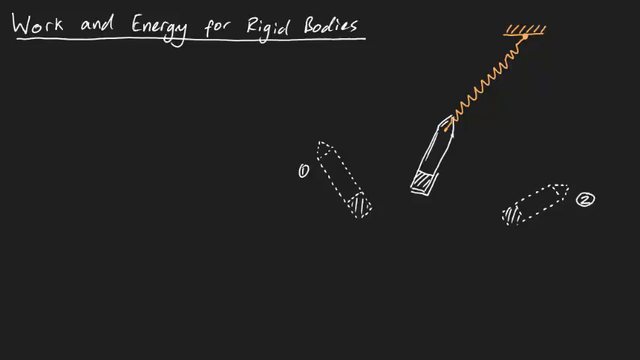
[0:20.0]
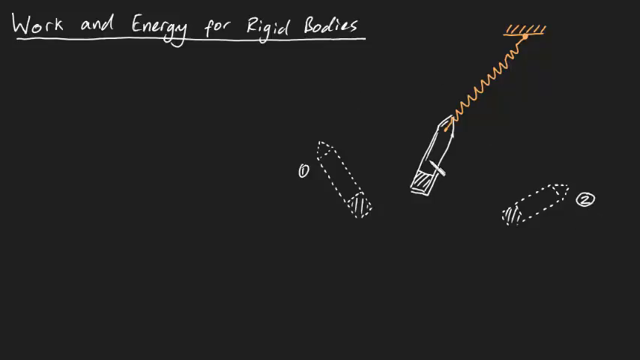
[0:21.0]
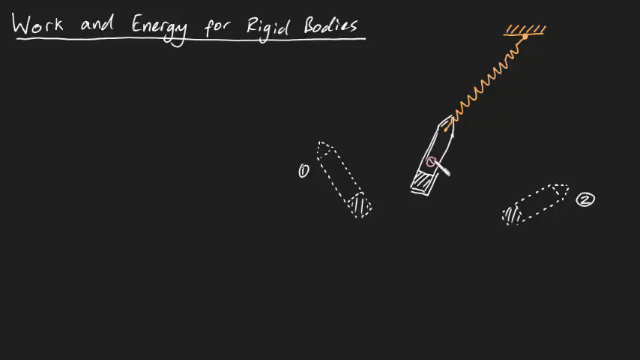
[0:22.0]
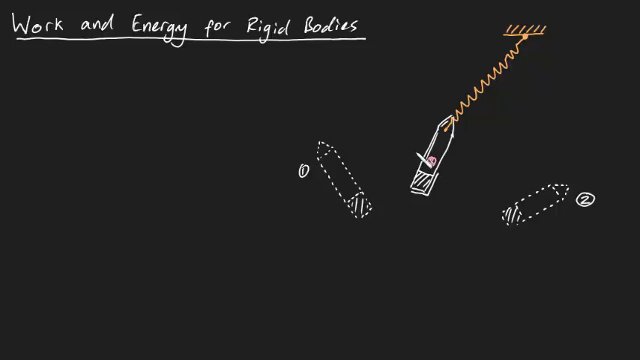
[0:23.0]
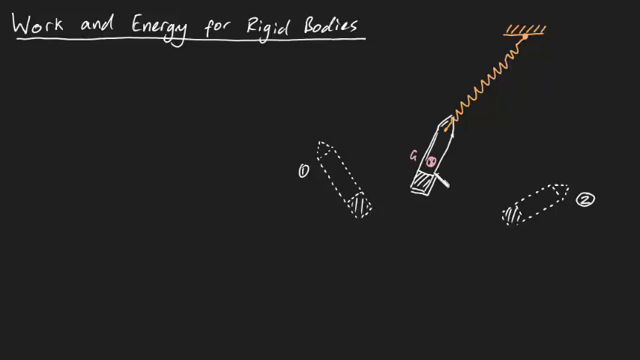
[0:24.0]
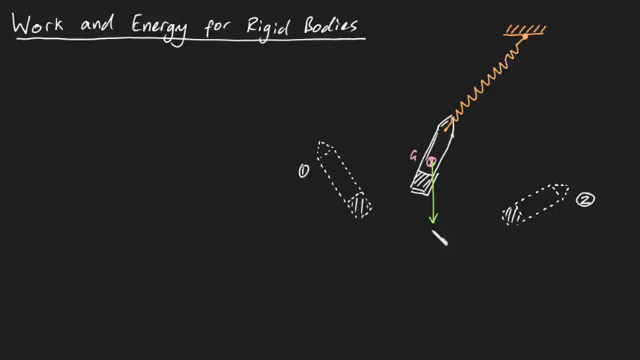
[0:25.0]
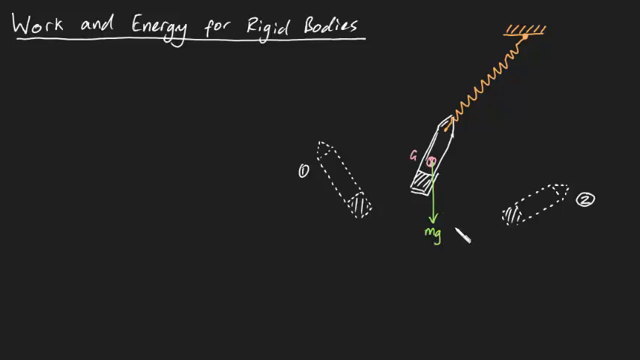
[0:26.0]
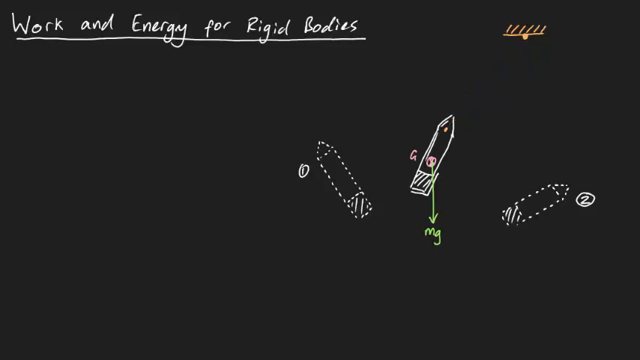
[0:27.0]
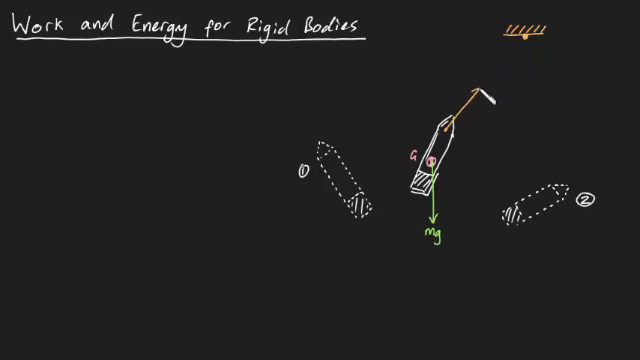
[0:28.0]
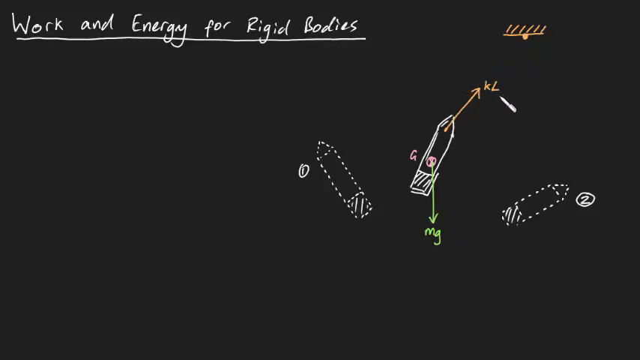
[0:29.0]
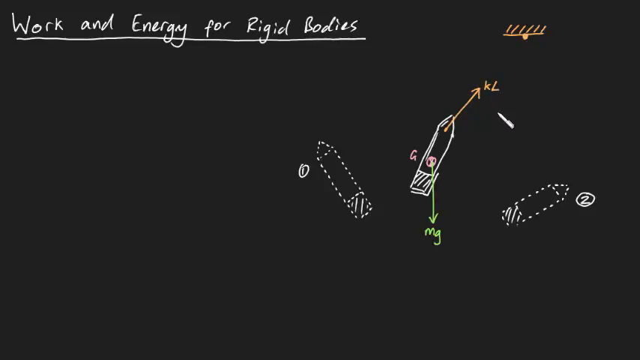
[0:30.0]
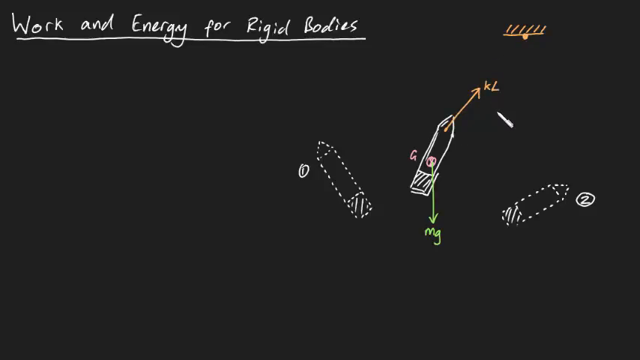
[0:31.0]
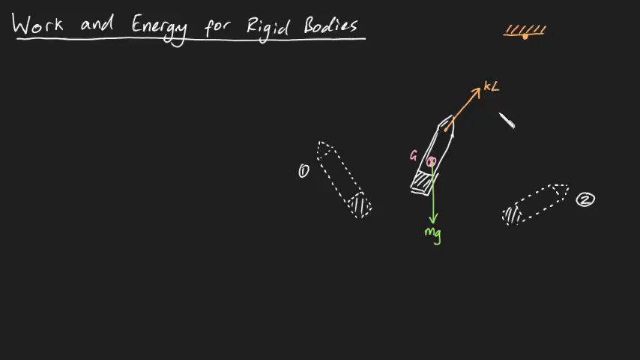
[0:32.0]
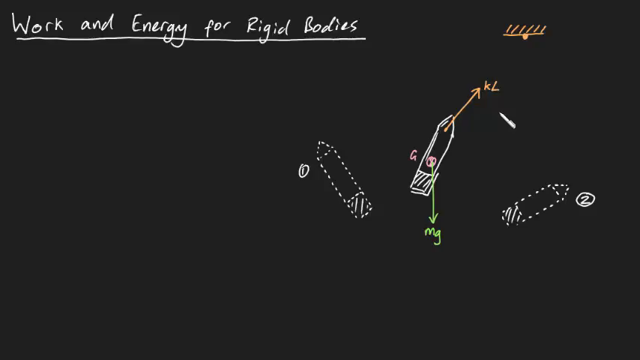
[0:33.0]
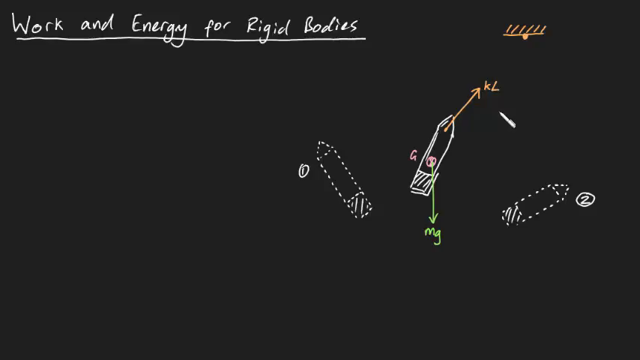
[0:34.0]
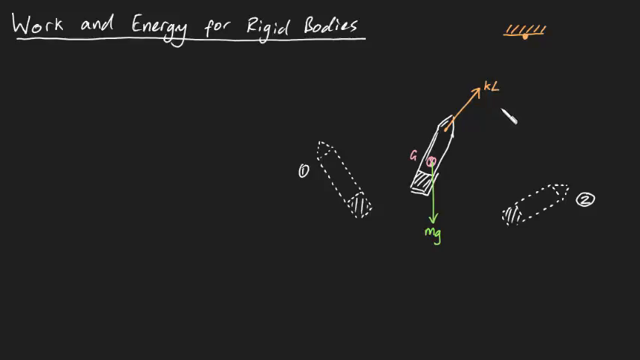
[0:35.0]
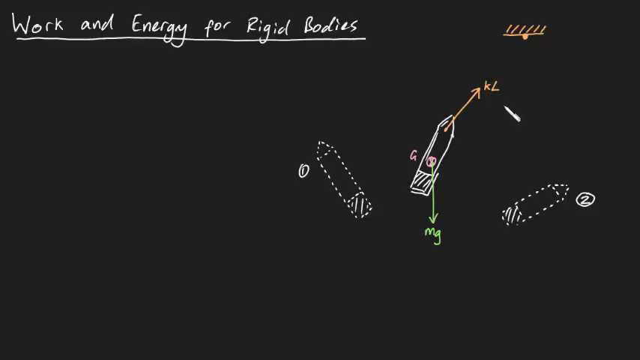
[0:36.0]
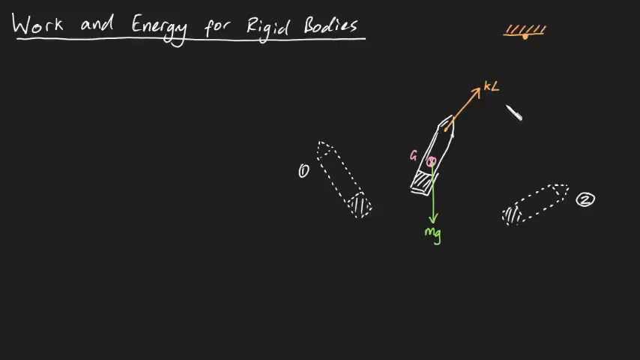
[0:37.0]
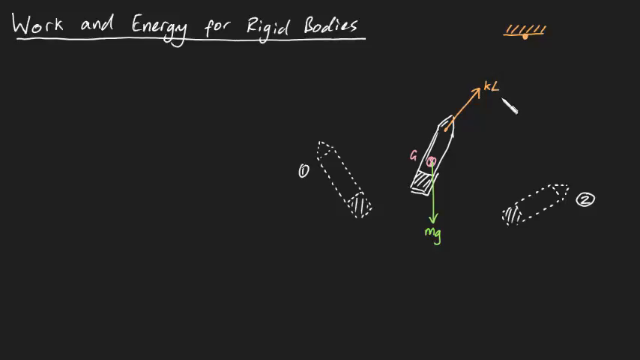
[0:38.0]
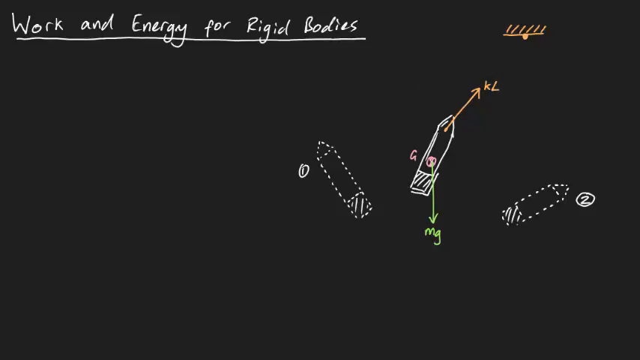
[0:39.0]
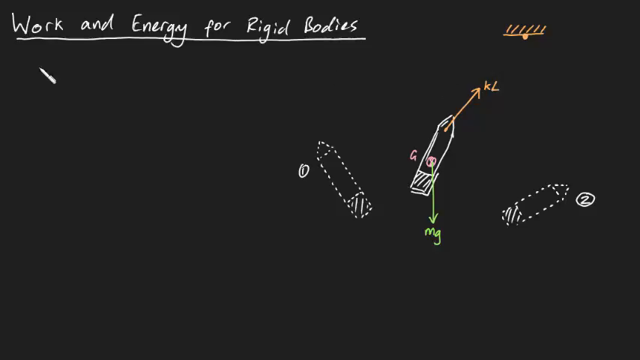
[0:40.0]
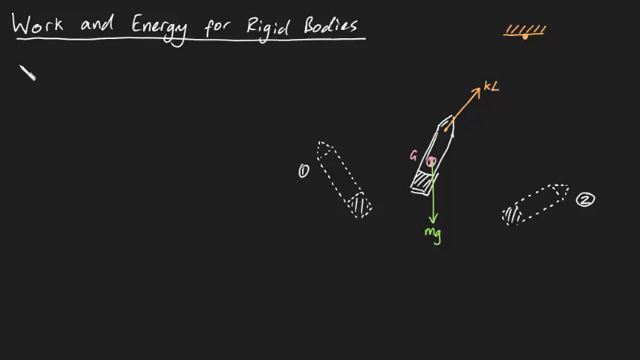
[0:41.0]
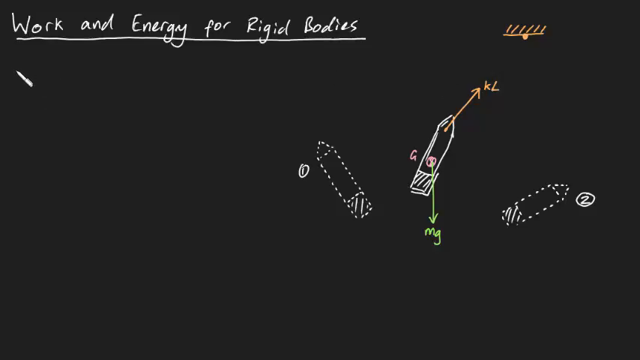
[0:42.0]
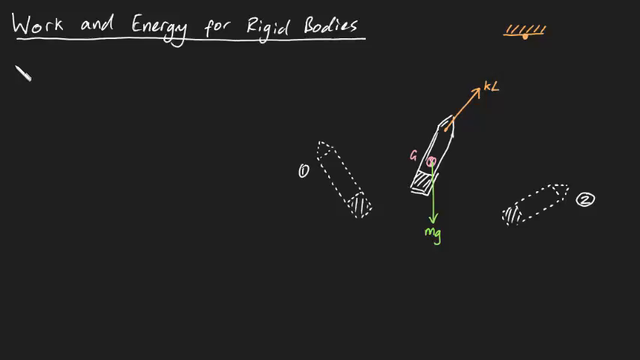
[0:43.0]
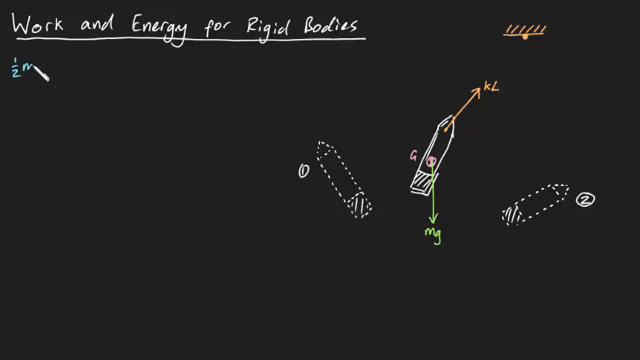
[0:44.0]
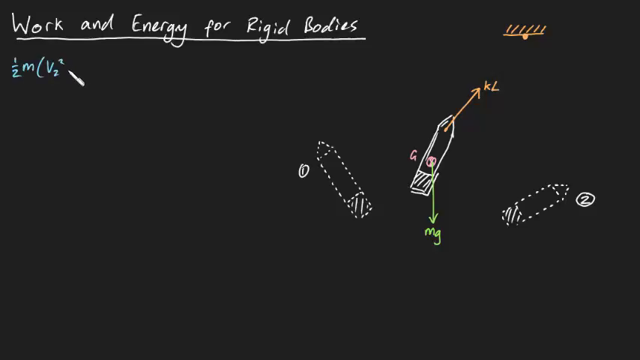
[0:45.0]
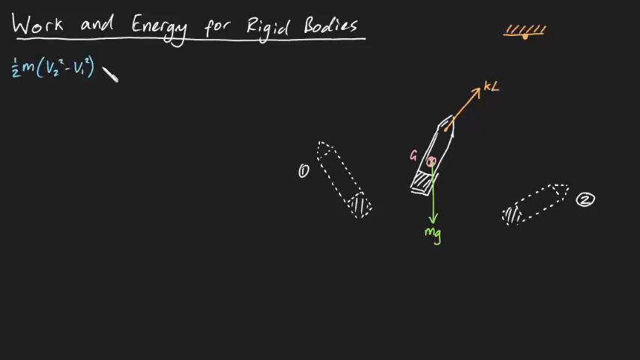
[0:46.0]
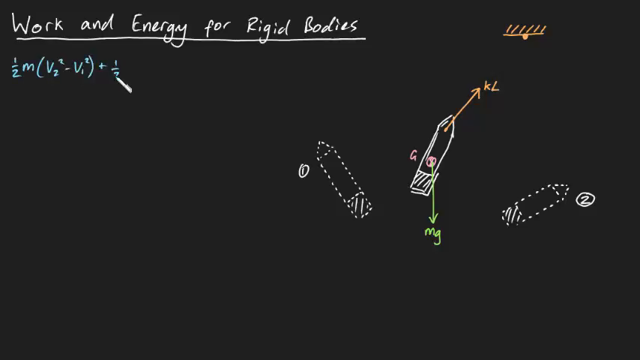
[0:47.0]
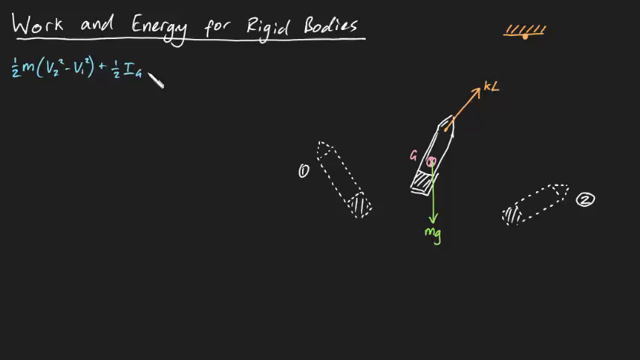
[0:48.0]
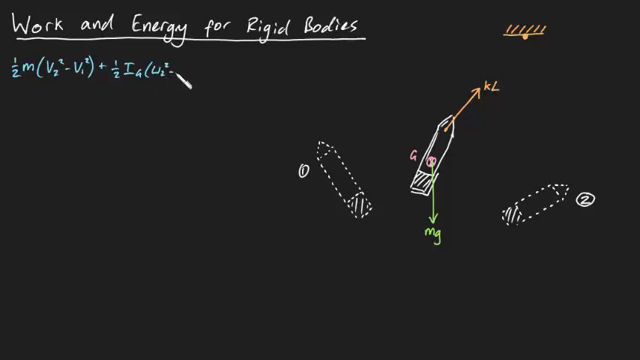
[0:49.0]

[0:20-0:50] The white cursor draws, in what is probably pink, a dot in the center of the object and the letter G next to it. Next, in green, it draws an arrow from the center of the object to the letters M and G, also written in green. The cursor then erases the elastic that connected the object to the wall and replaces it with an arrow running from the object to two letters, K and L; both the arrow and the letters are orange. The cursor stays still for a few moments next to the object, then moves fairly quickly from right to left and pauses for a few moments under the title written in white. Finally, it moves from left to right, writing a mathematical formula with various numbers and symbols in blue.